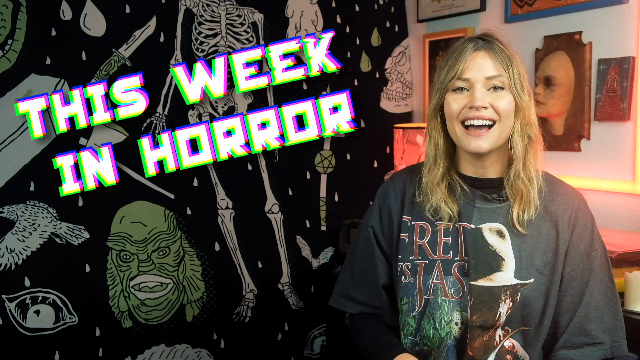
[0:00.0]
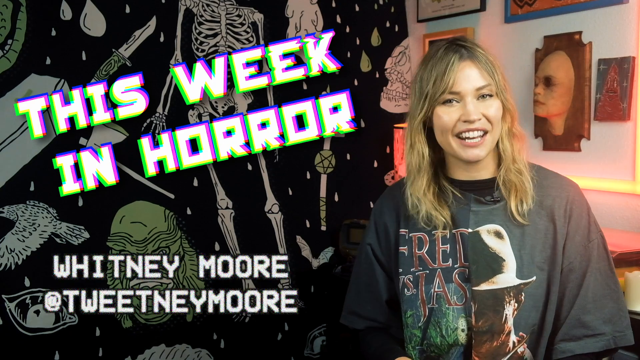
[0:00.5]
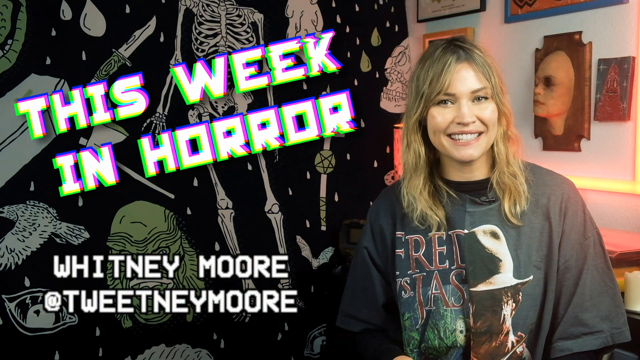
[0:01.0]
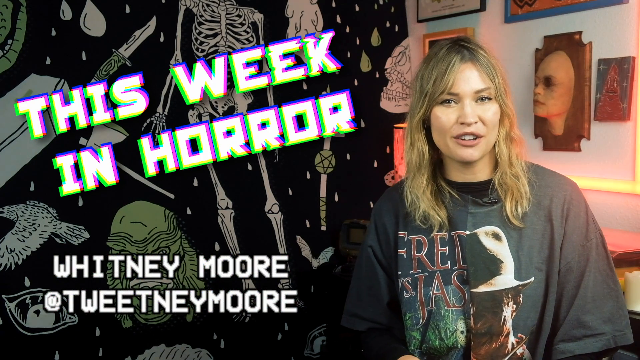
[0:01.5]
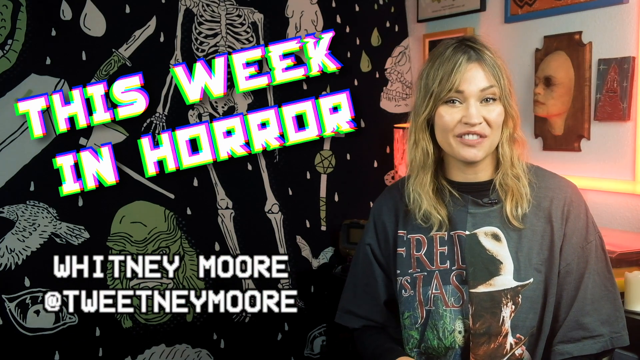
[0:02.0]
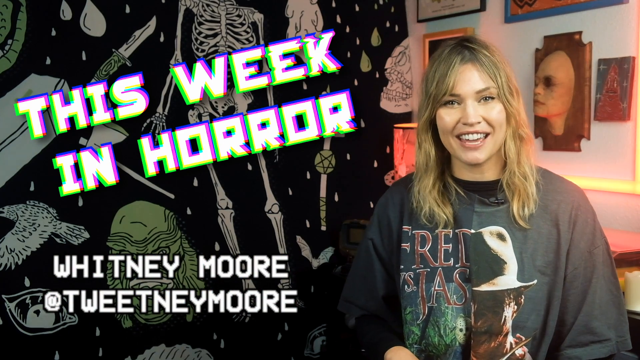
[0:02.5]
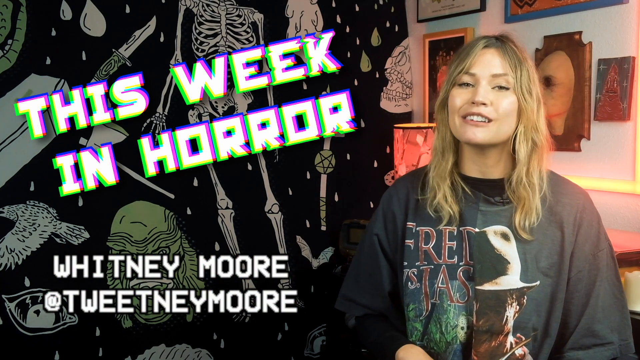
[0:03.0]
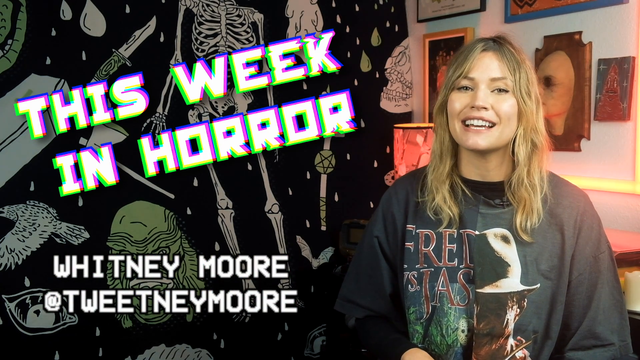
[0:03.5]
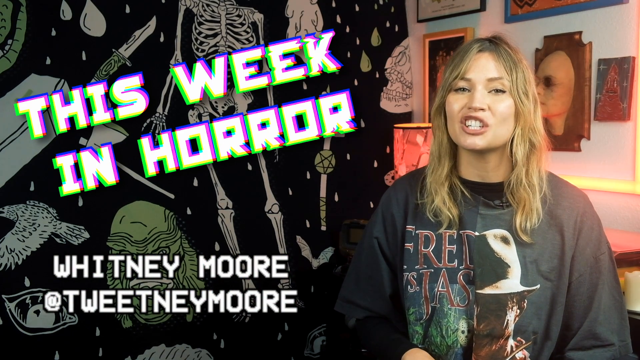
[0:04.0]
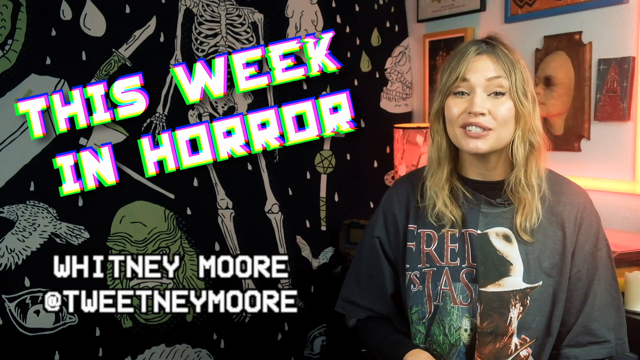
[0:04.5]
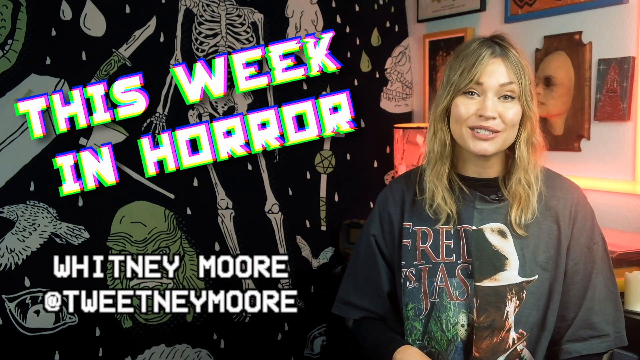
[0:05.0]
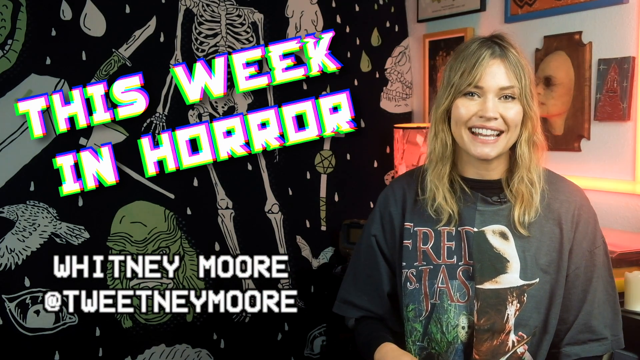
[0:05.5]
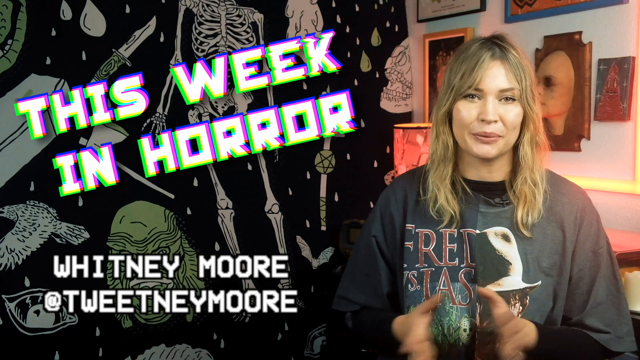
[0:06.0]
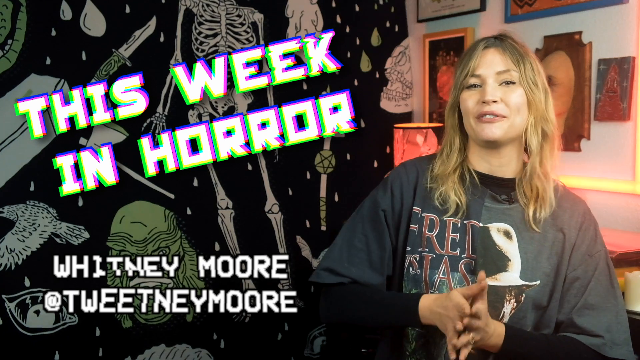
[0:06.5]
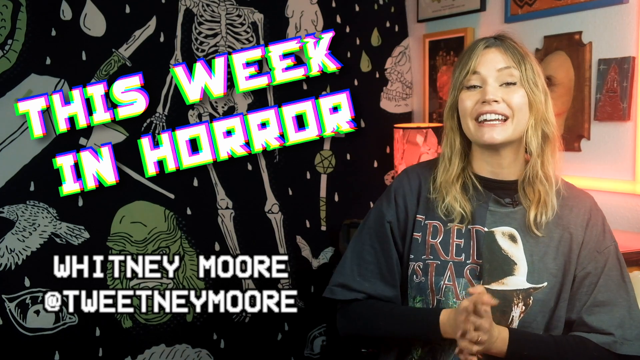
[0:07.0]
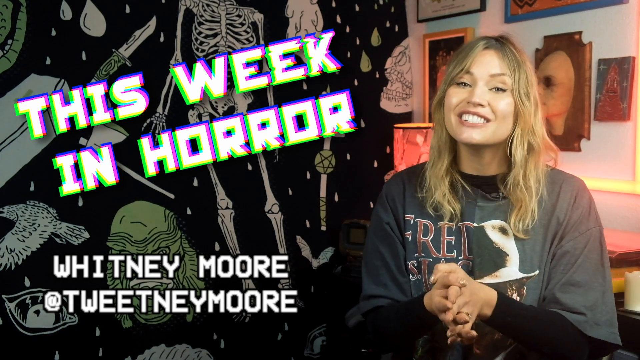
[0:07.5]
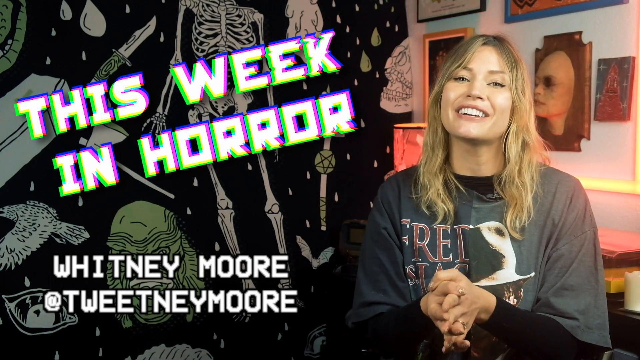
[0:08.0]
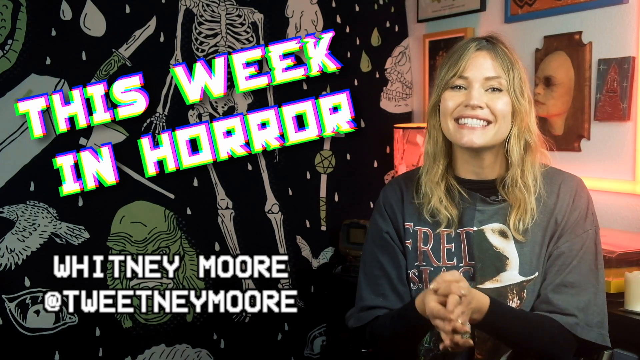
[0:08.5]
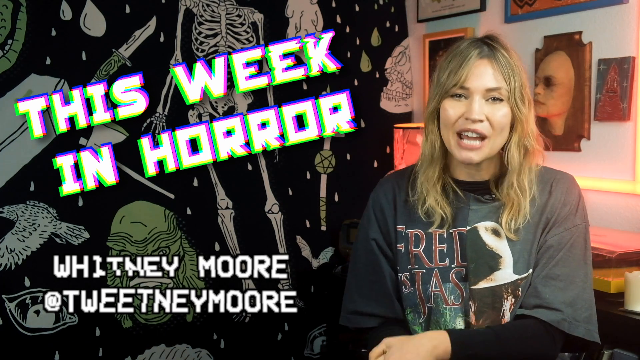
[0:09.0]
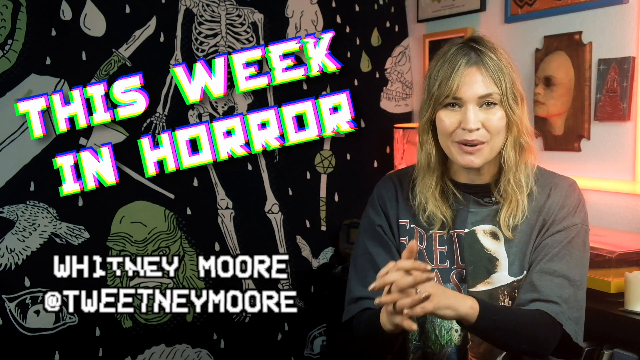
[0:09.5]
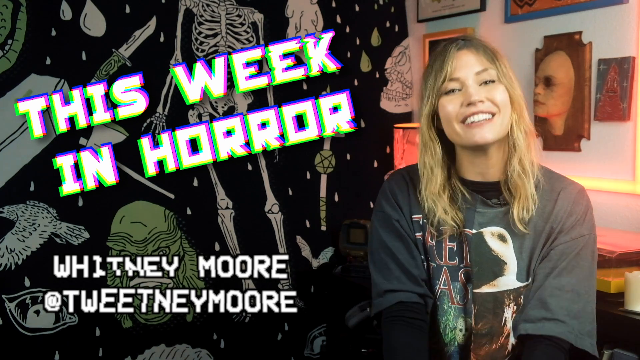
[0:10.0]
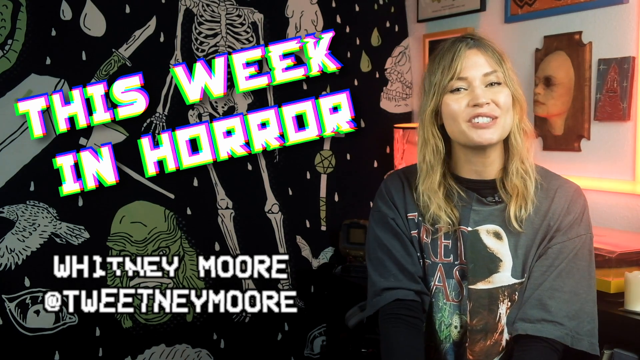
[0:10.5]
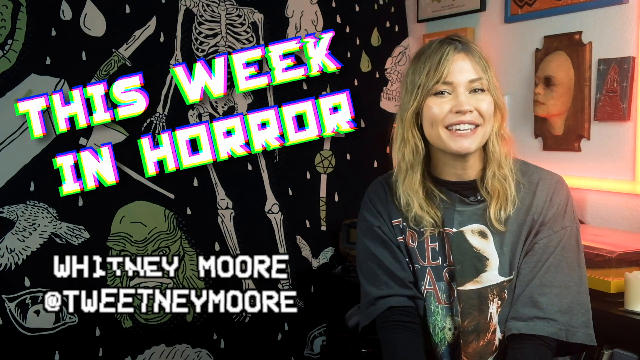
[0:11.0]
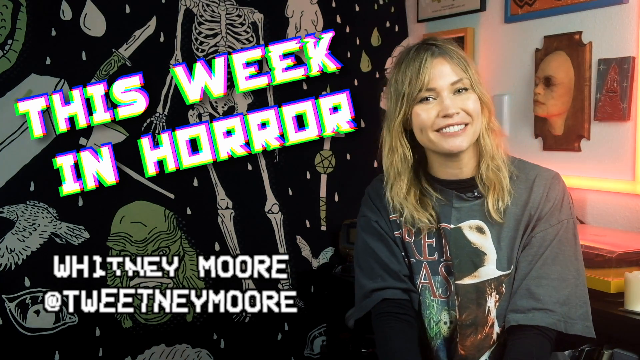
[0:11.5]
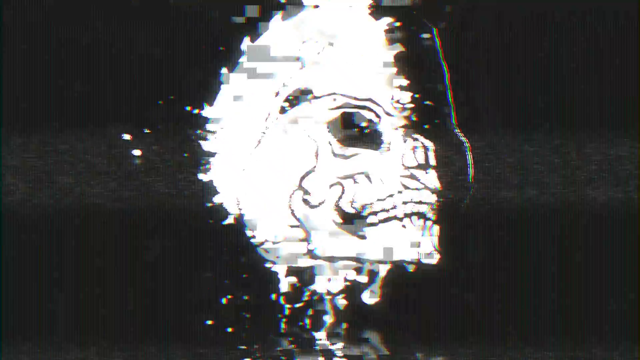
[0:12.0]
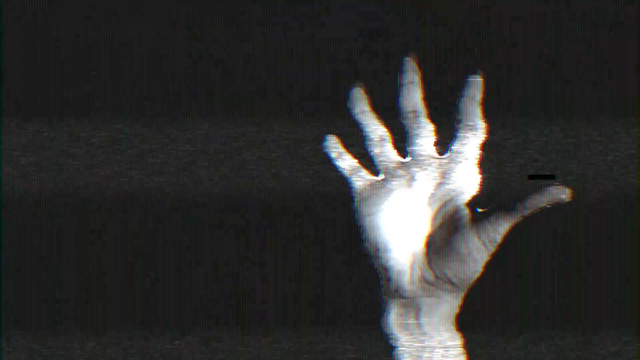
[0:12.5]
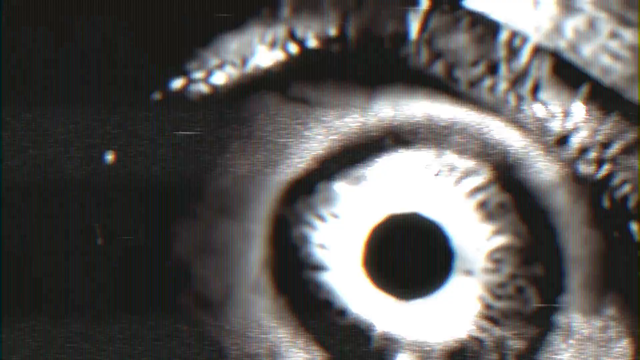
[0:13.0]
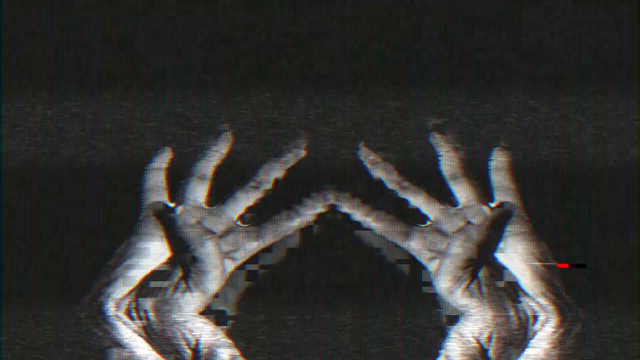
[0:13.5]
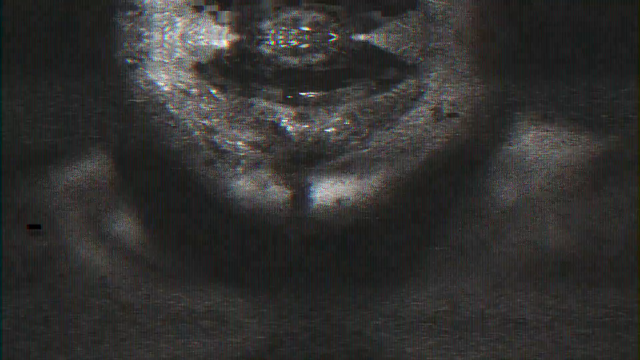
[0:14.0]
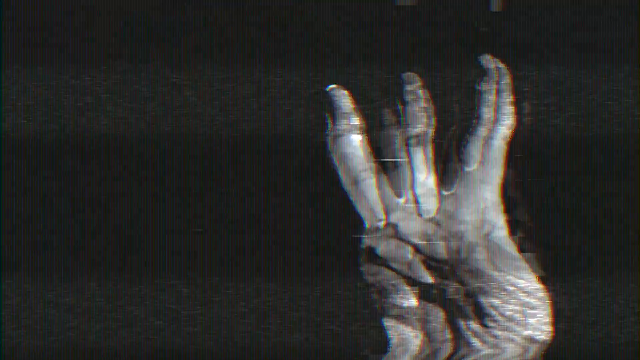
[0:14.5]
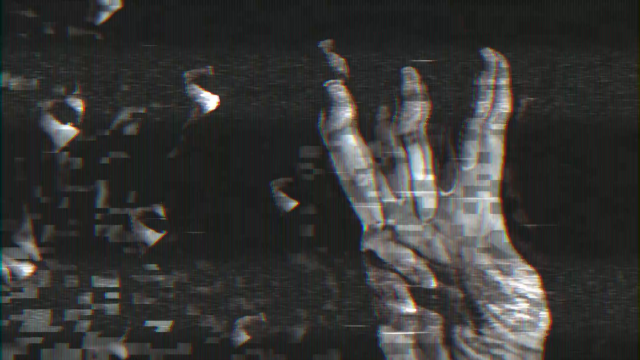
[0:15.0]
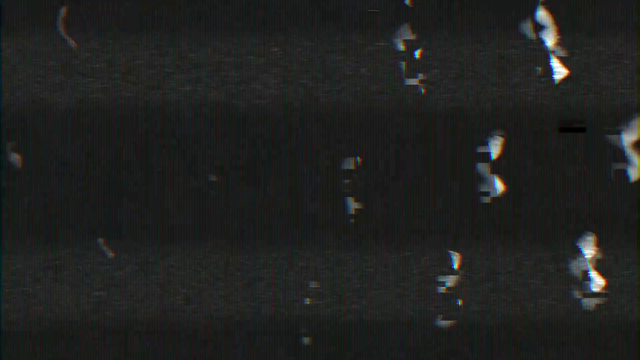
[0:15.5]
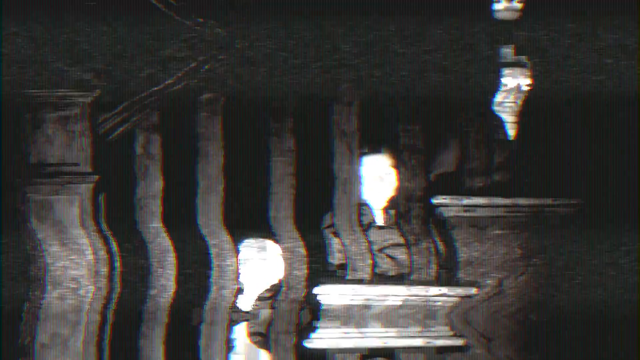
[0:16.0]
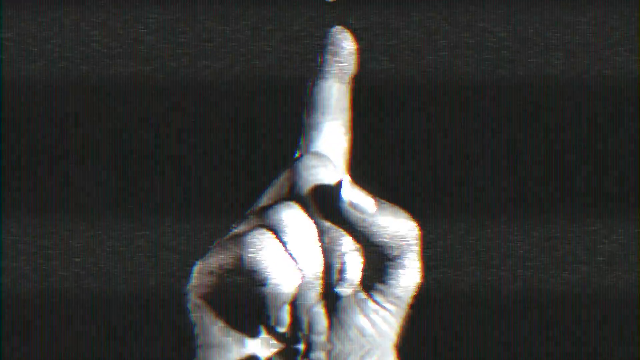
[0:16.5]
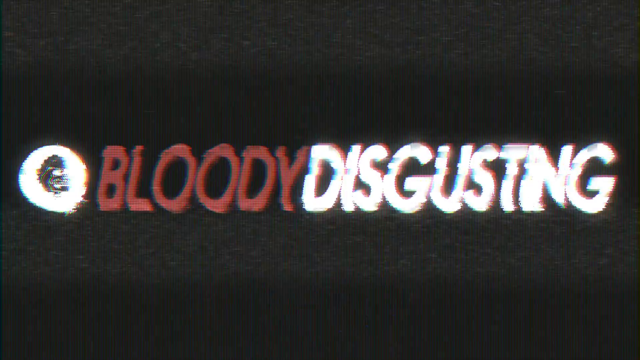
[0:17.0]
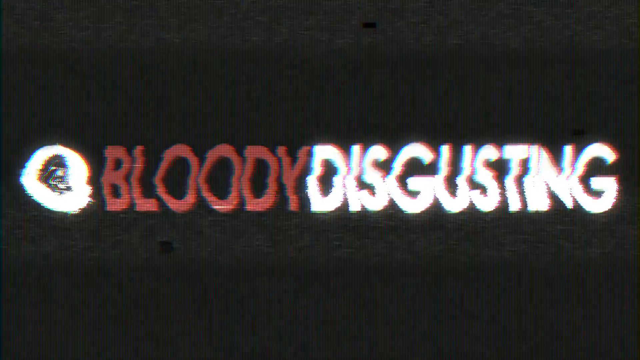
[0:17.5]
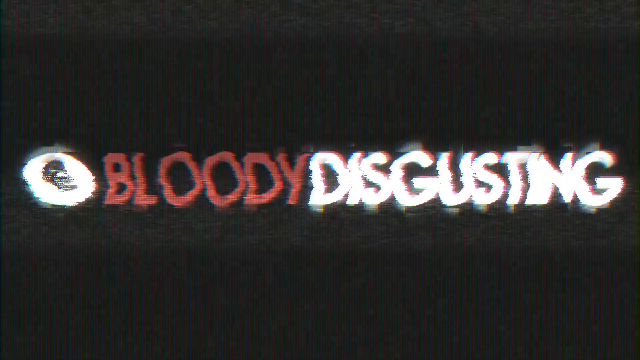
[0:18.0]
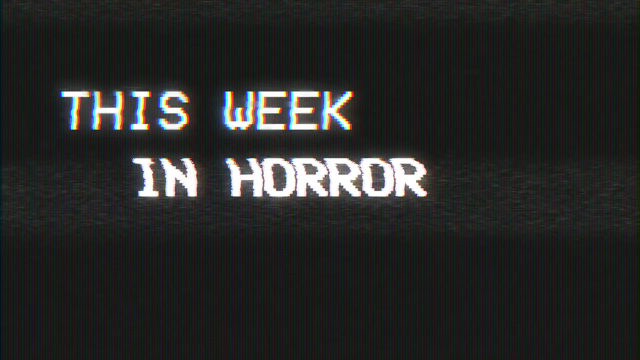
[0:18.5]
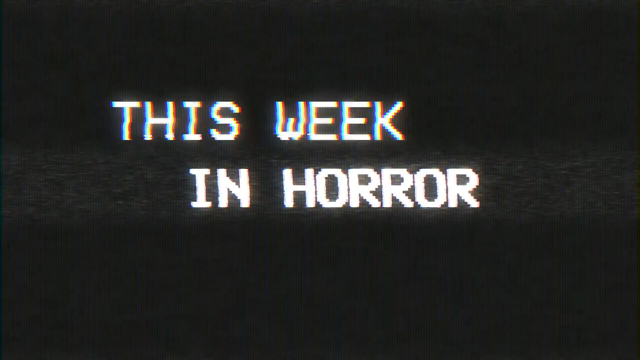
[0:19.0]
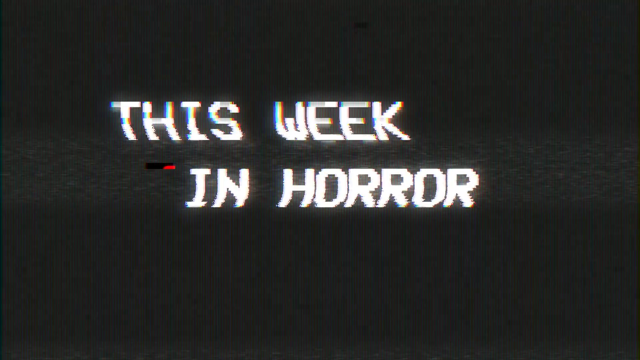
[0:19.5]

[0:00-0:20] The video is a movie review by a woman named Whitney Moore. She has blonde hair and wears a gray shirt with a horror-looking print, with a mic clipped onto the shirt. The wall behind her is black and has skeletons, knives, birds and many other scary designs. On her left side is a green, white, blue and yellow caption that reads "This week in horror." She smiles and looks excited as she is about to begin. Images of hands, fingers and eyes then appear in a black-and-white filter, followed by the title "Bloody disgusting" in red and white, and the whole scene looks very scary. The words "This week in horror" show up again.